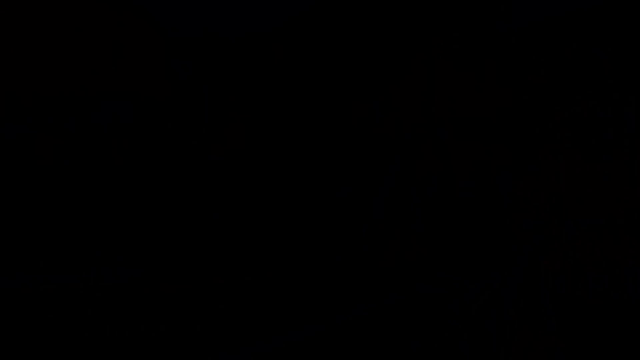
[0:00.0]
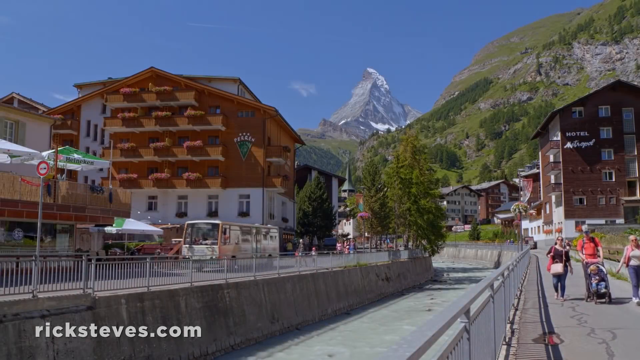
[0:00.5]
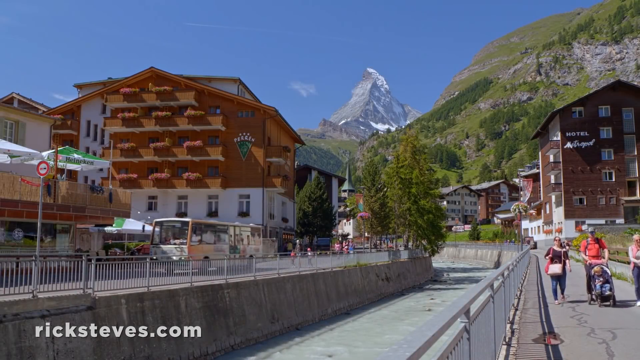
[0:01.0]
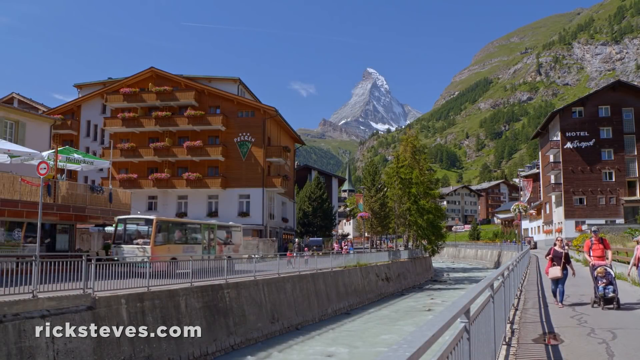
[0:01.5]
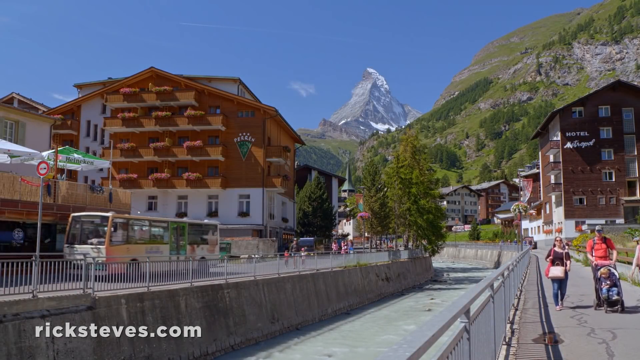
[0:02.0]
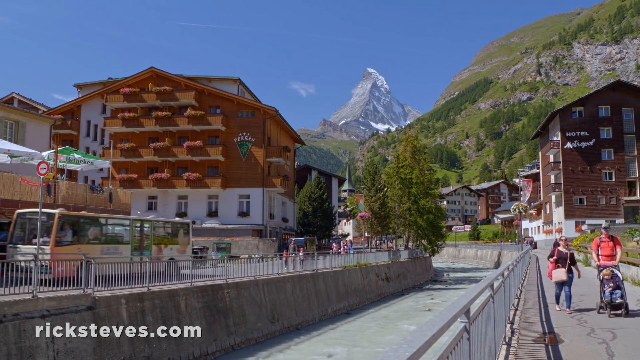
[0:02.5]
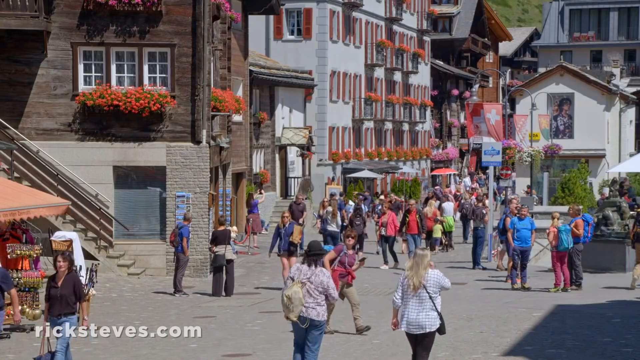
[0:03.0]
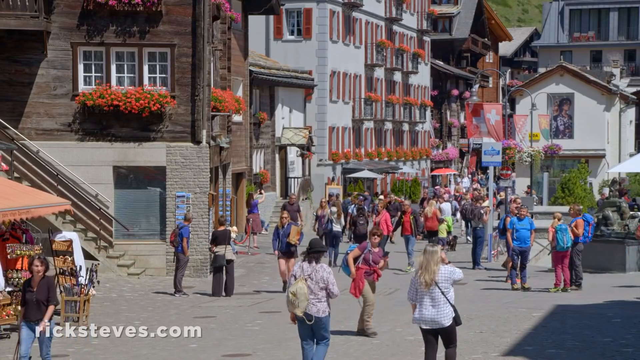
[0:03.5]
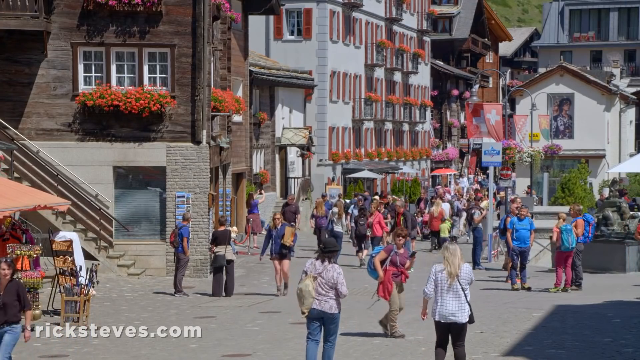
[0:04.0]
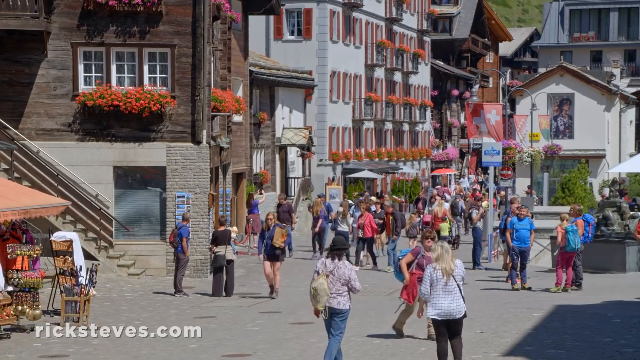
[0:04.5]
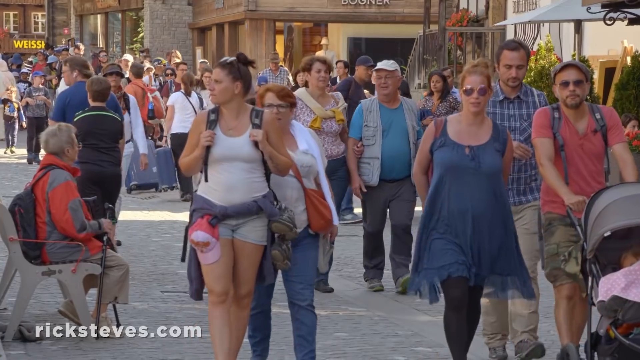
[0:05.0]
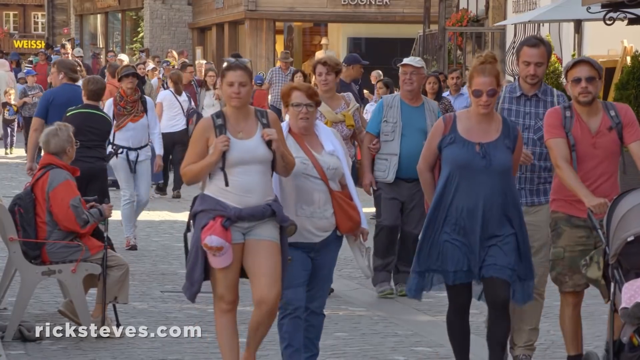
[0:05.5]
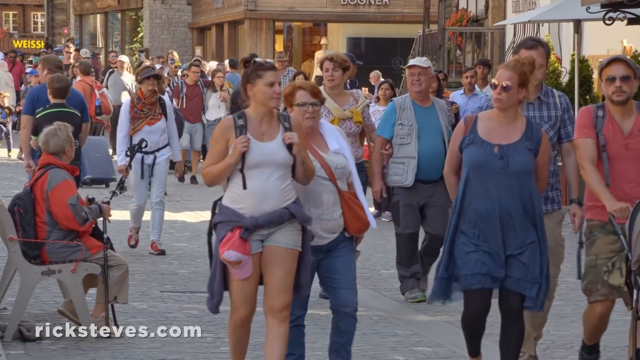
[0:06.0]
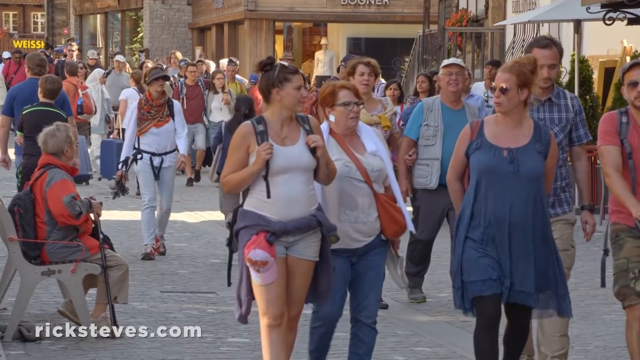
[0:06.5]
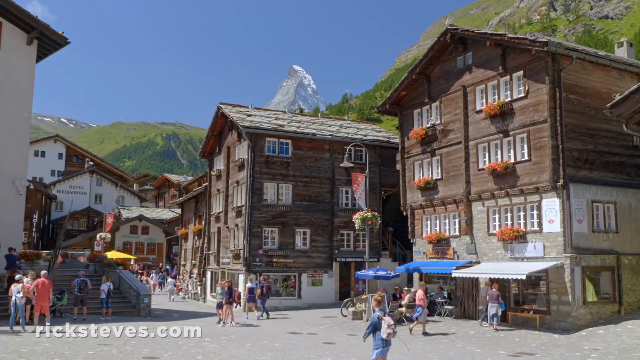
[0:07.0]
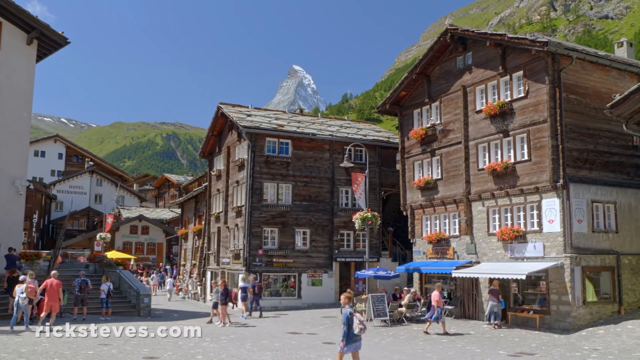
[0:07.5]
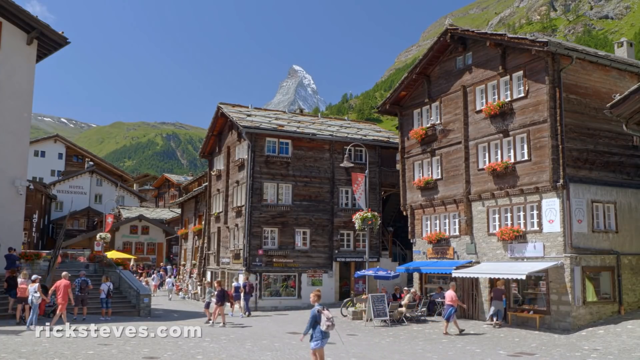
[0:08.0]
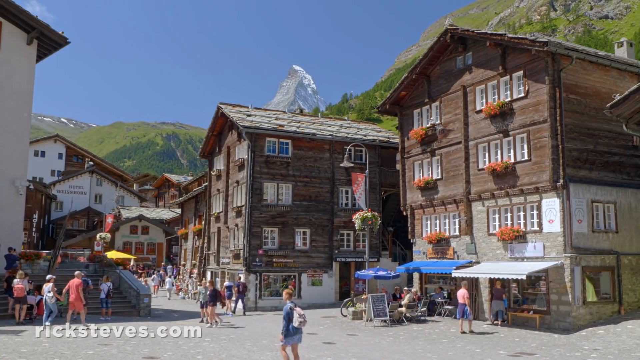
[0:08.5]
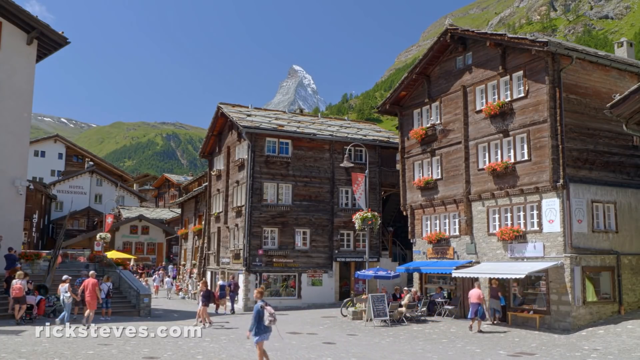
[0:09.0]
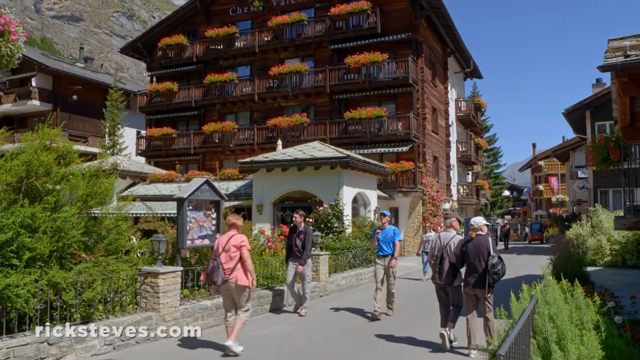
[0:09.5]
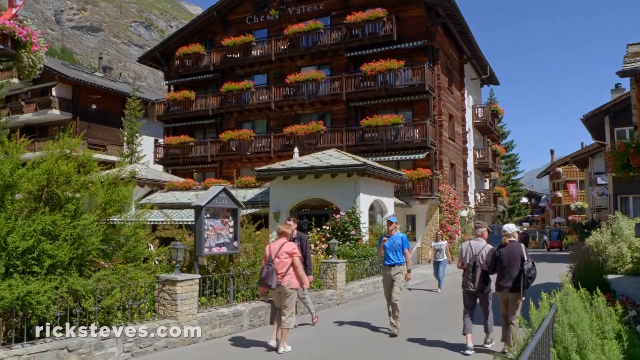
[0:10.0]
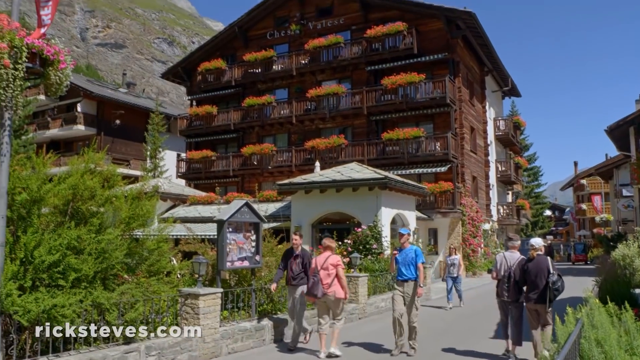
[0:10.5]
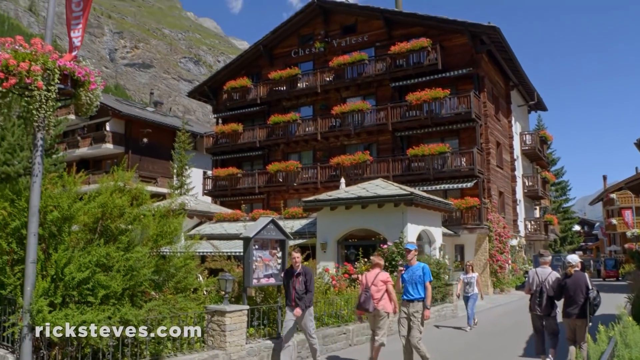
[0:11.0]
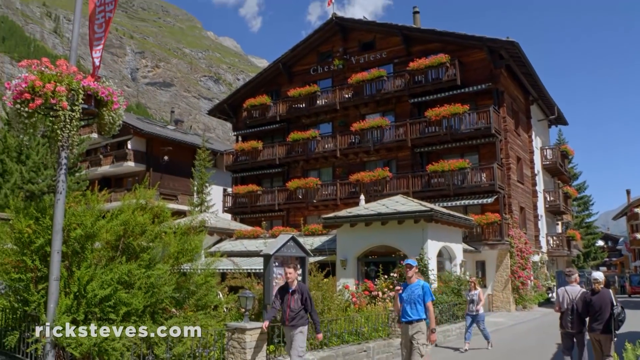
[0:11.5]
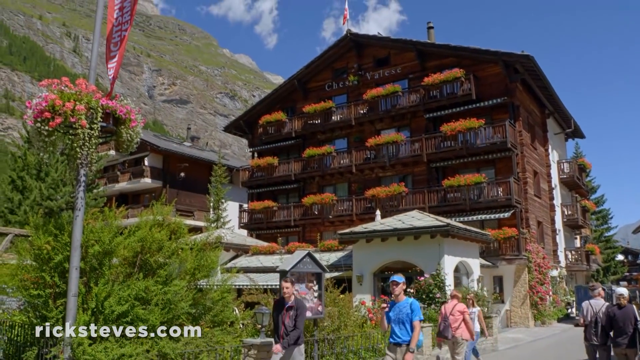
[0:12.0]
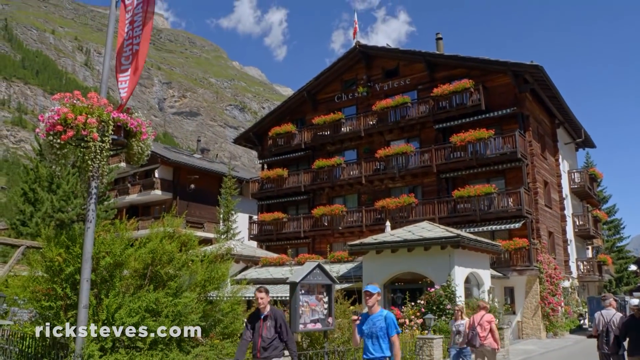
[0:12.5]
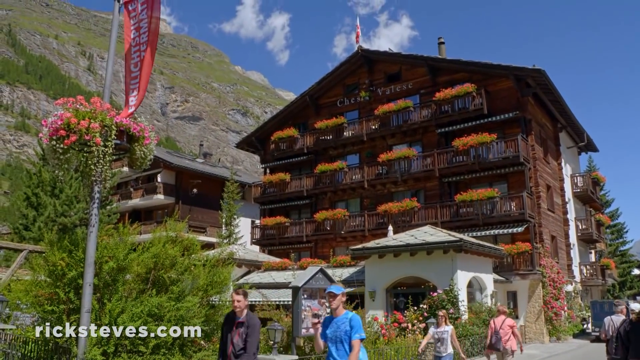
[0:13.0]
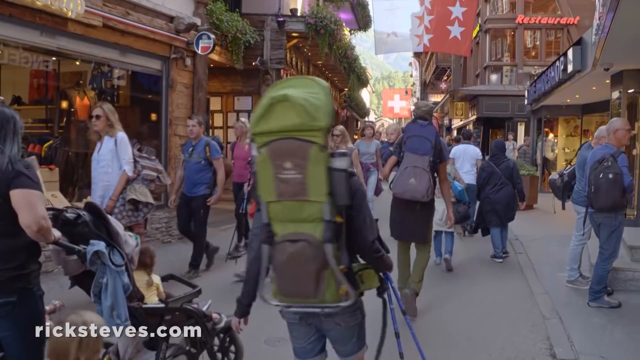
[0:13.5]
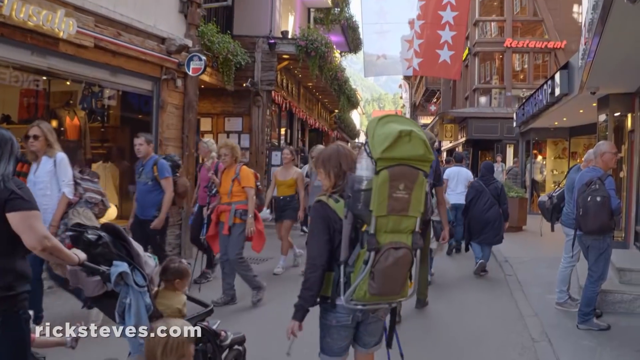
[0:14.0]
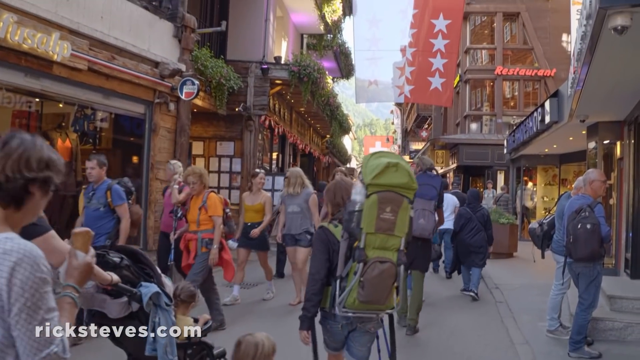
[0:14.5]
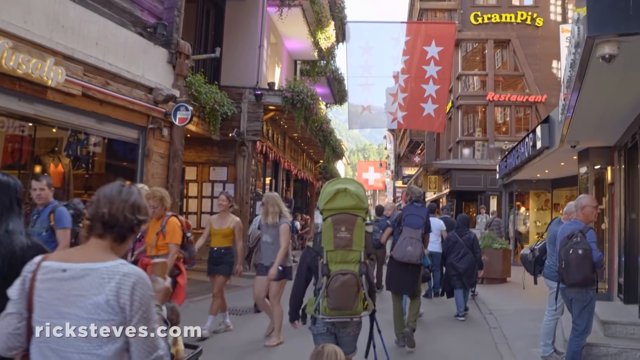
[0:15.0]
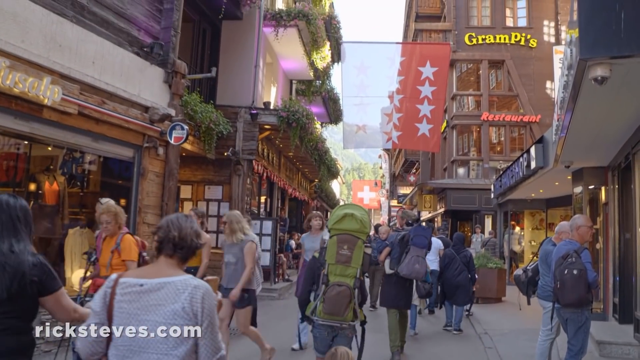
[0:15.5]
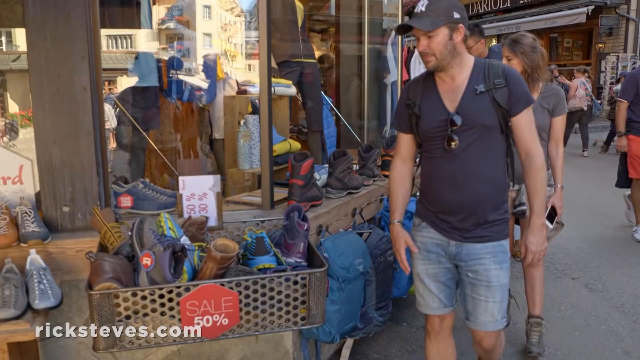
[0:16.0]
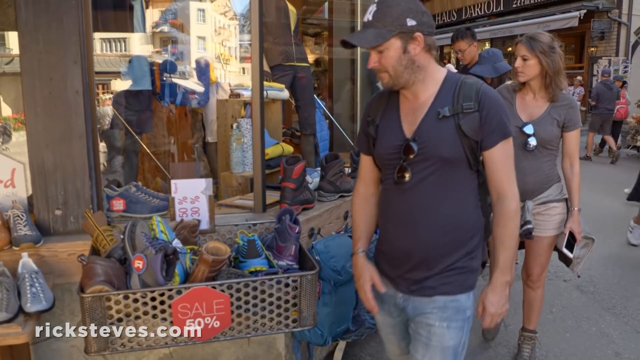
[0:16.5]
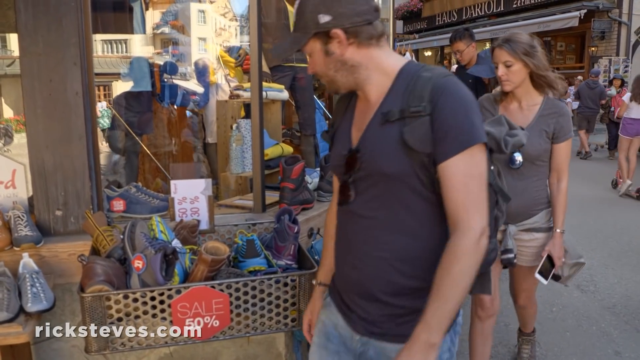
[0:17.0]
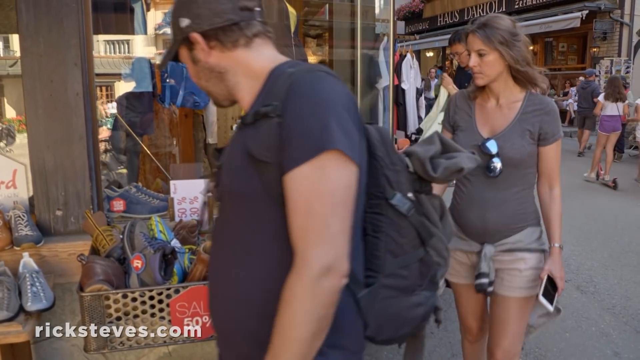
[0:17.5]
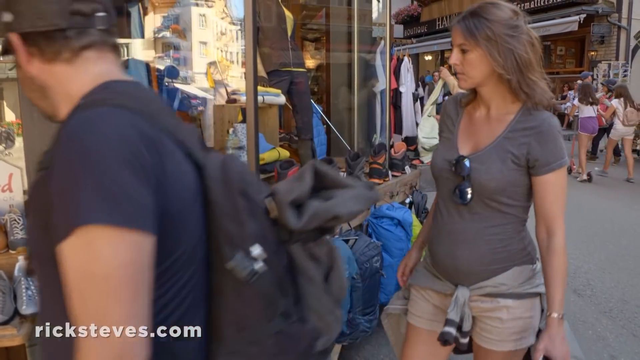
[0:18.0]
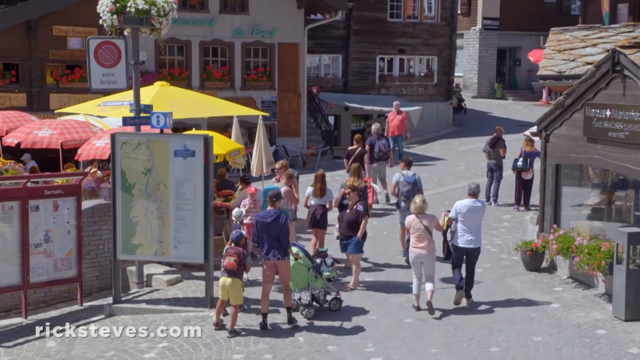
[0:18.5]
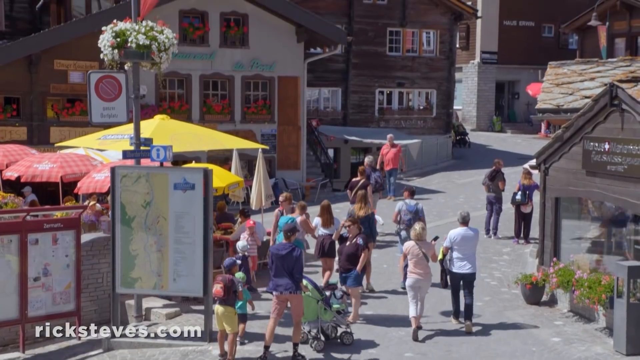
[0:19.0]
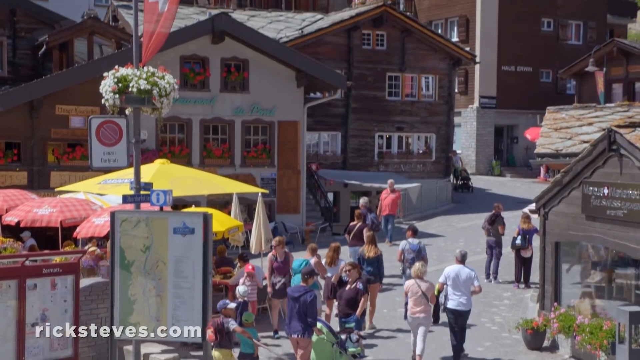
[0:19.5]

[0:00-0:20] The video is about Zermatt, Switzerland, finding charm in the Swiss Alps. What looks to be crowds of people walk down a street lined with old buildings, with mountains in the background. People have backpacks on, and some push strollers with young children. Somewhat chalet-type buildings appear, with flower planters underneath all the windows and on balconies. It is a sunny day in a downtown area with lots of stores and what look to be restaurants, and people mill about, looking at the architecture of the buildings and the mountains. A Swiss flag is flying. What look to be wares for sale are in shopping carts and outside the storefronts. It appears to be a warm day, as people are in shorts and t-shirts or short sleeves, and a woman is eating an ice cream cone. The street looks closed to traffic, apparently a pedestrian roadway.